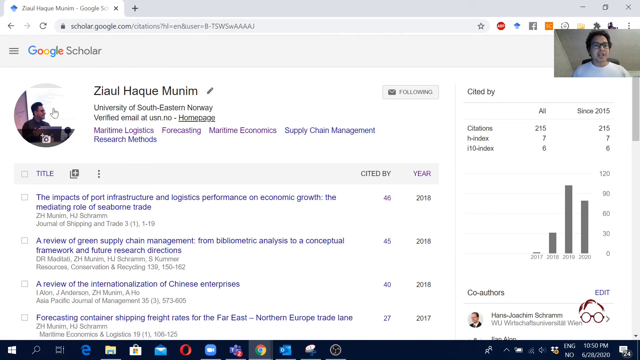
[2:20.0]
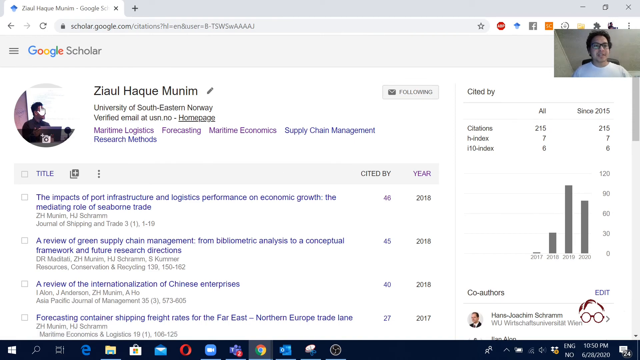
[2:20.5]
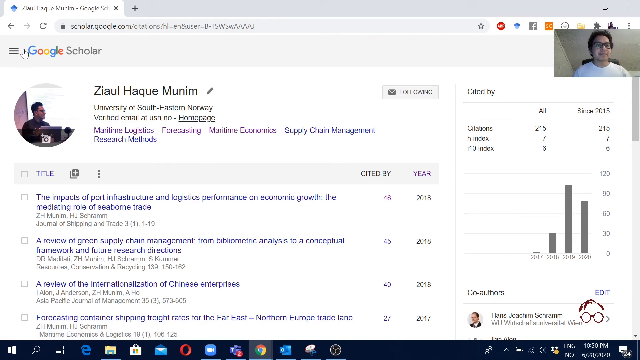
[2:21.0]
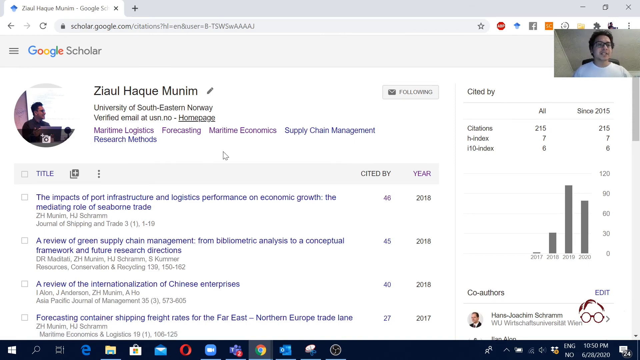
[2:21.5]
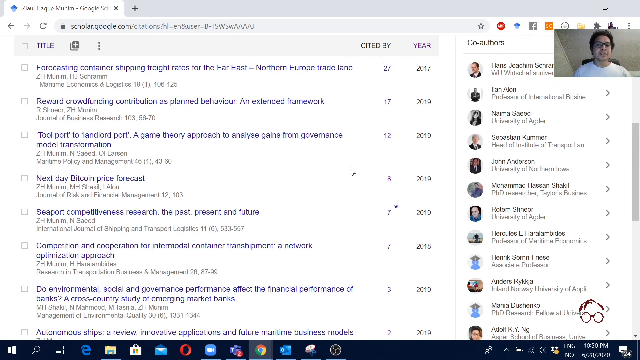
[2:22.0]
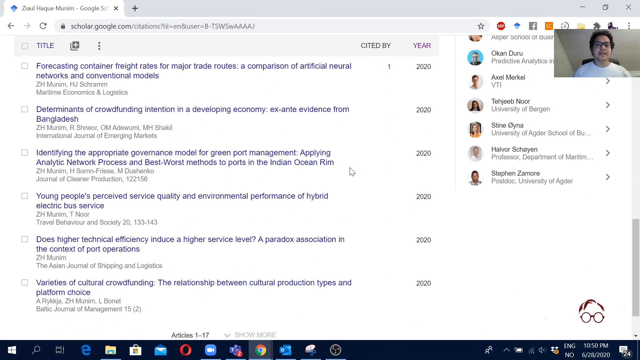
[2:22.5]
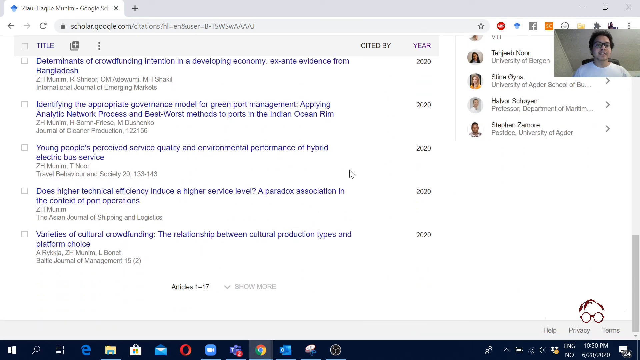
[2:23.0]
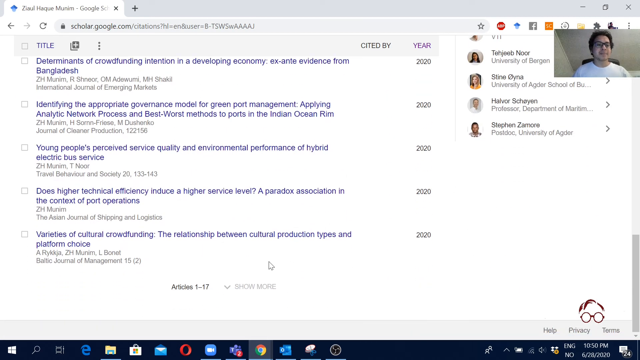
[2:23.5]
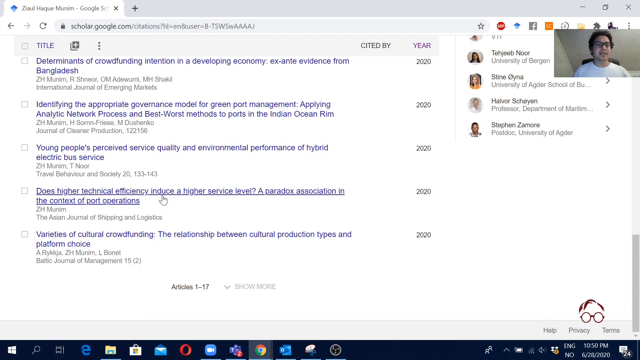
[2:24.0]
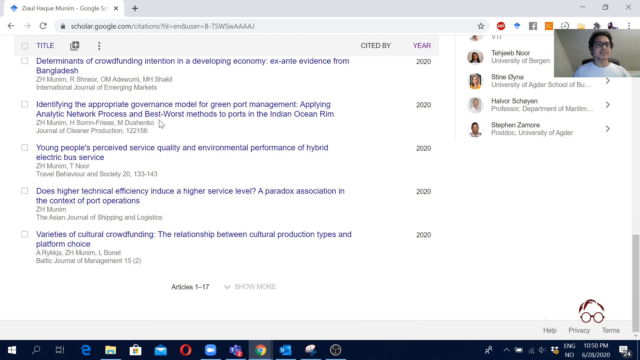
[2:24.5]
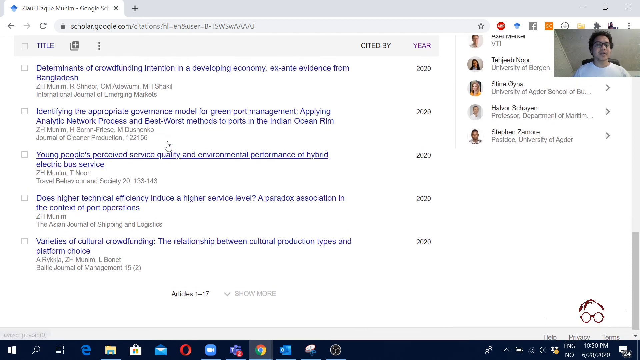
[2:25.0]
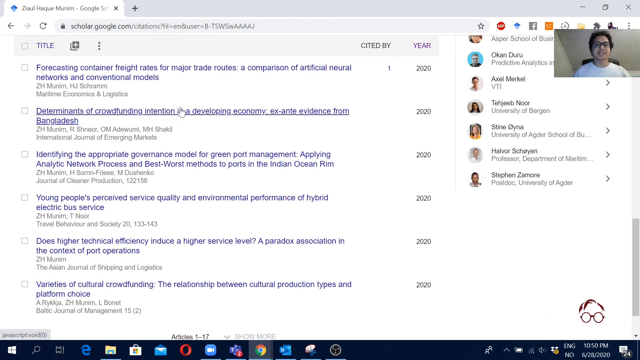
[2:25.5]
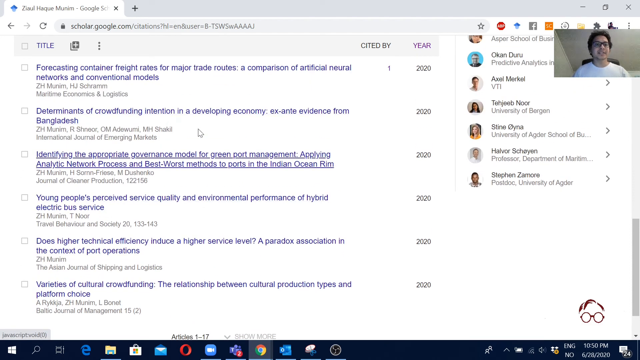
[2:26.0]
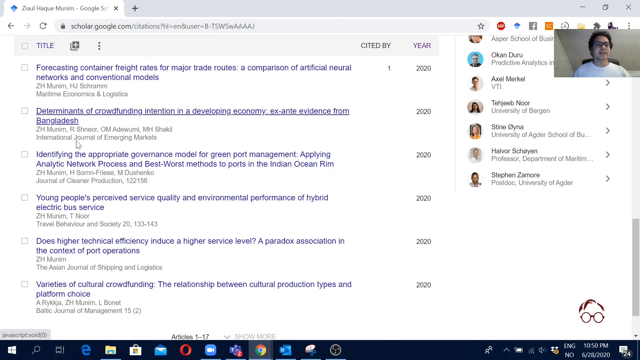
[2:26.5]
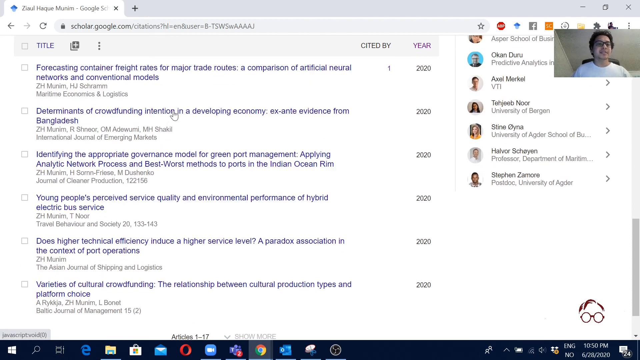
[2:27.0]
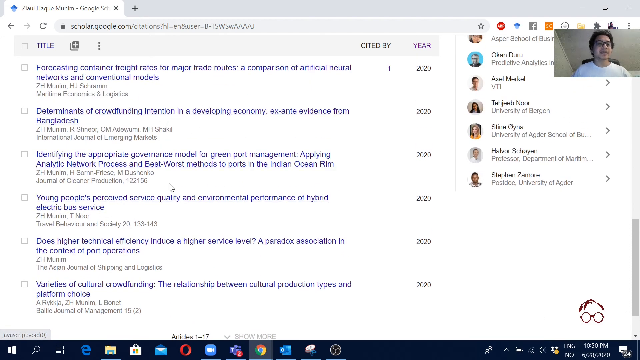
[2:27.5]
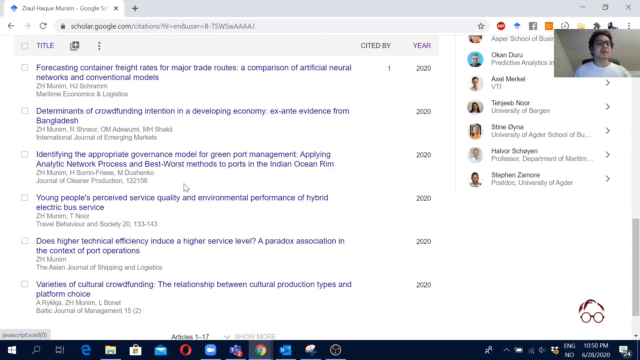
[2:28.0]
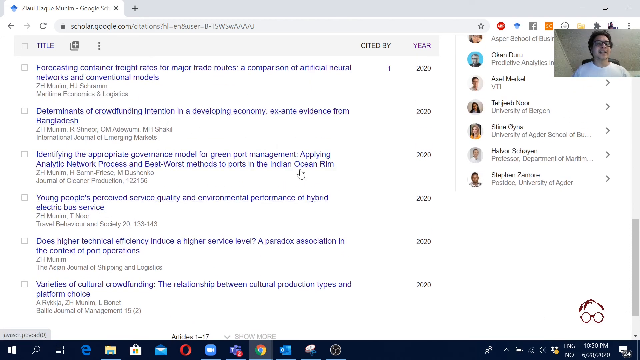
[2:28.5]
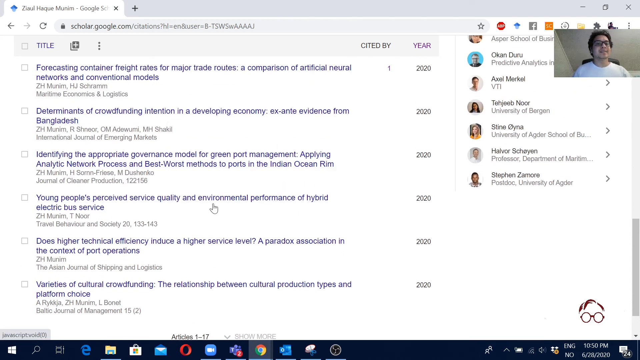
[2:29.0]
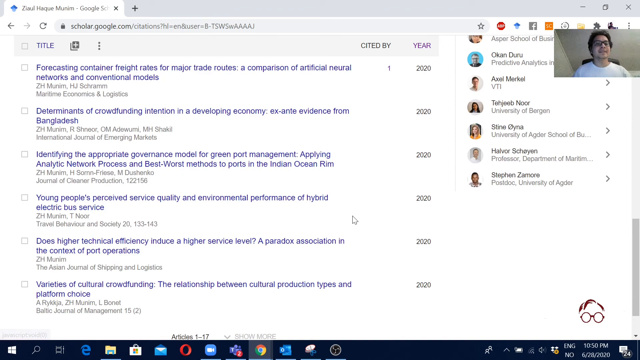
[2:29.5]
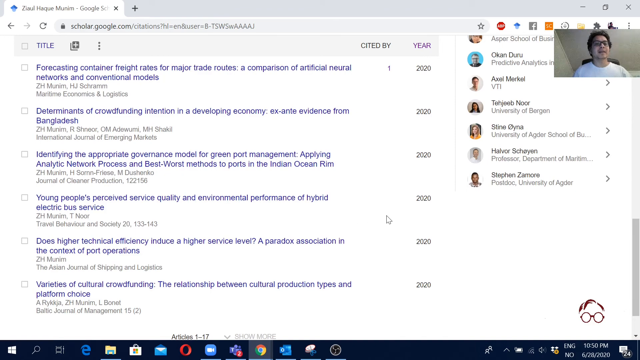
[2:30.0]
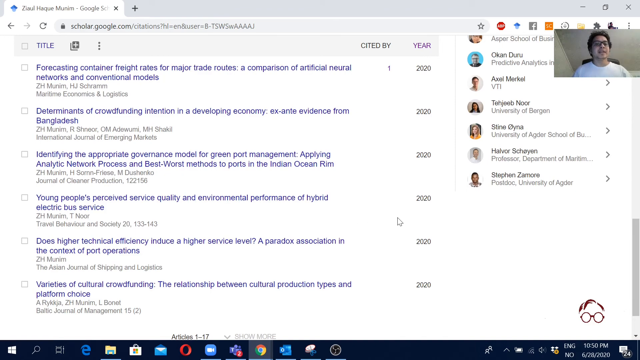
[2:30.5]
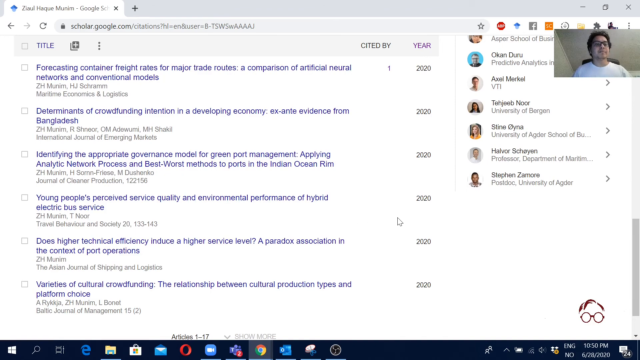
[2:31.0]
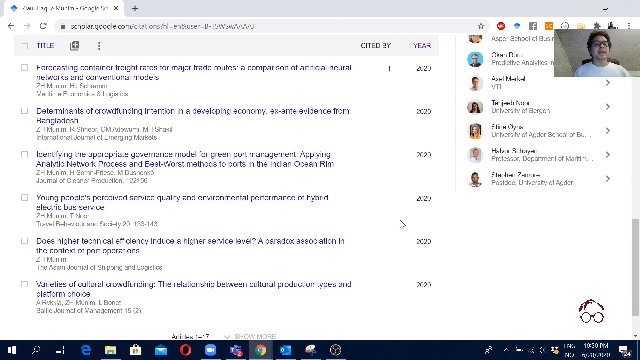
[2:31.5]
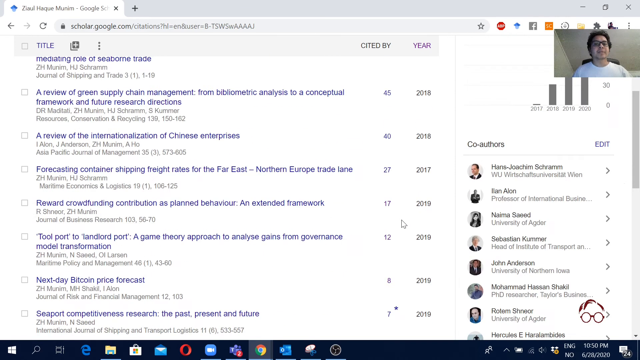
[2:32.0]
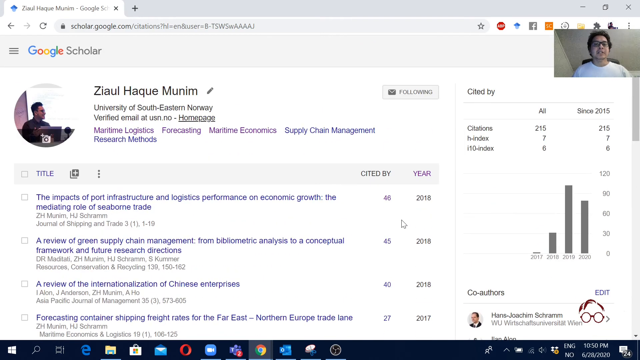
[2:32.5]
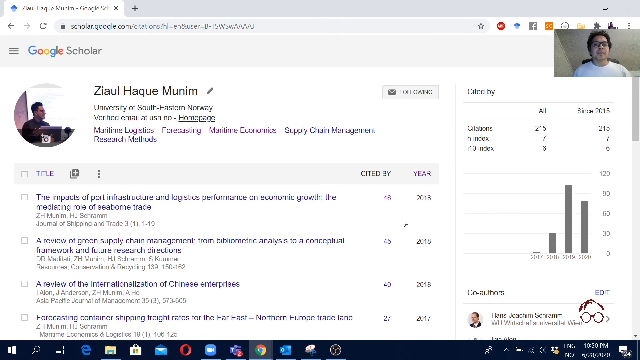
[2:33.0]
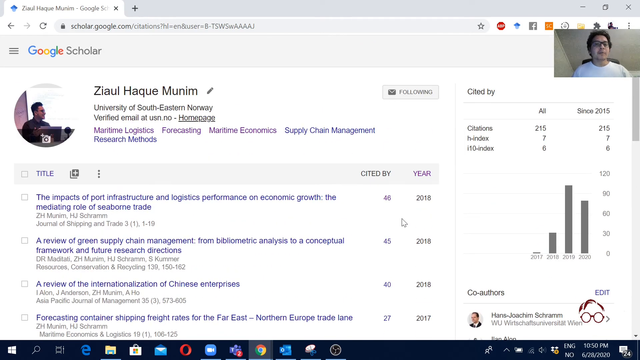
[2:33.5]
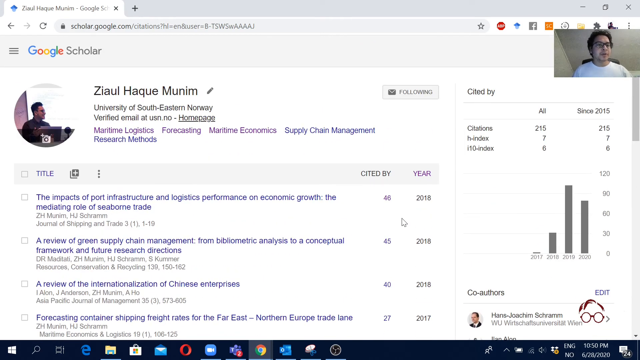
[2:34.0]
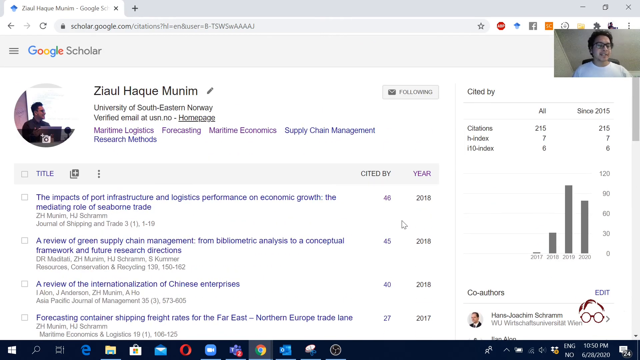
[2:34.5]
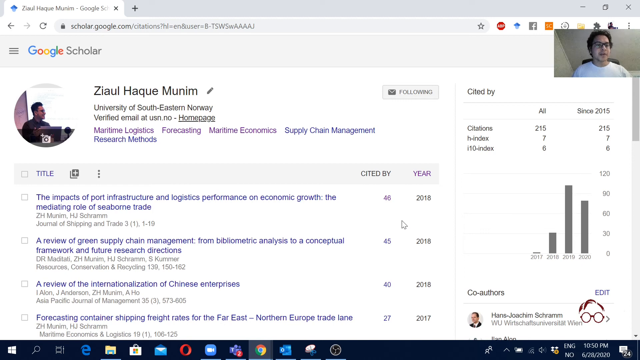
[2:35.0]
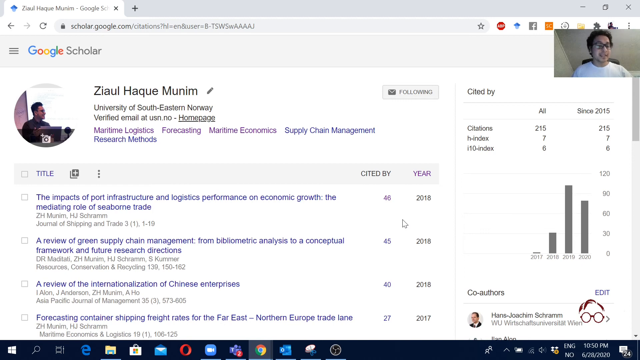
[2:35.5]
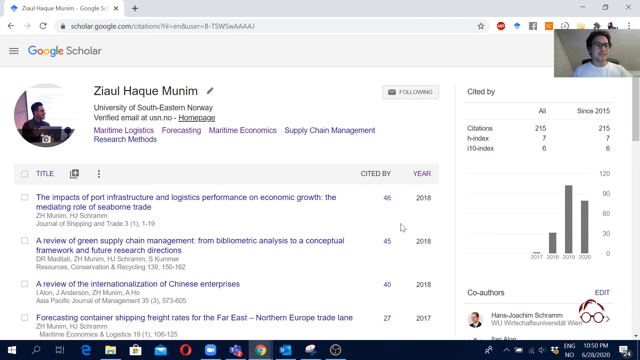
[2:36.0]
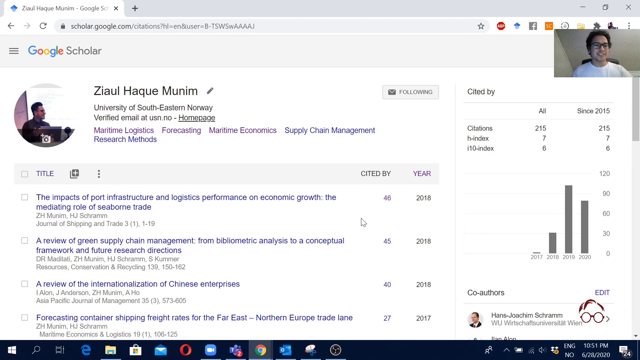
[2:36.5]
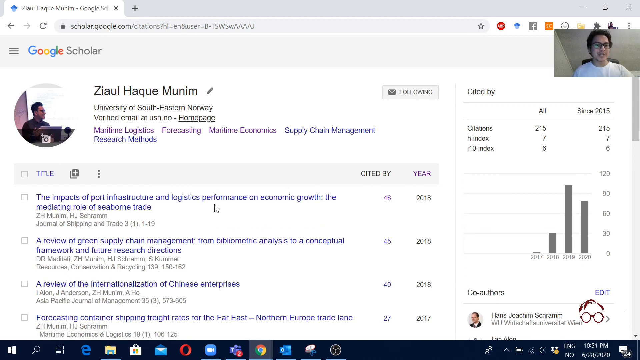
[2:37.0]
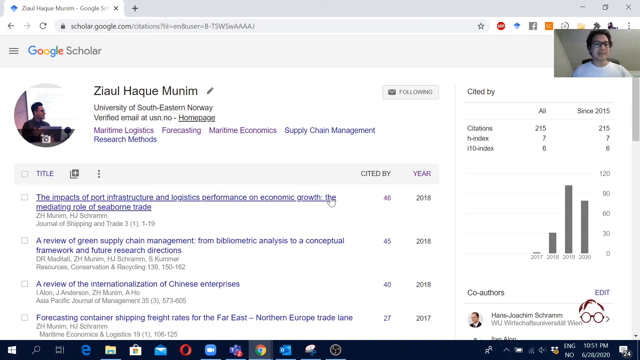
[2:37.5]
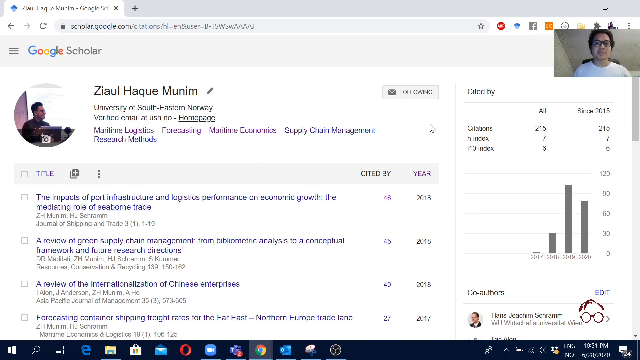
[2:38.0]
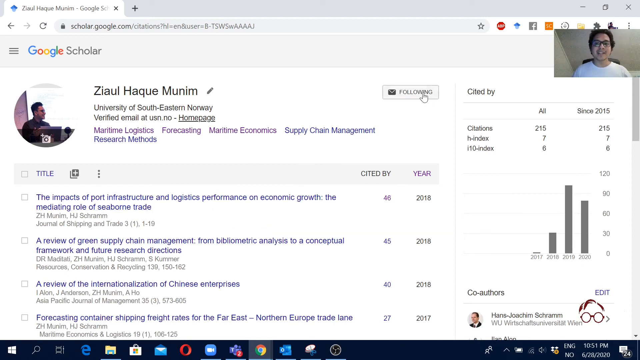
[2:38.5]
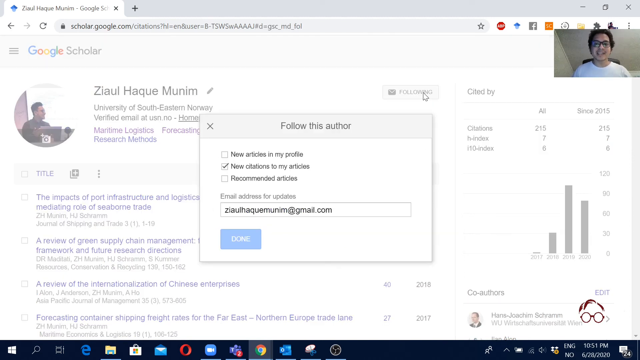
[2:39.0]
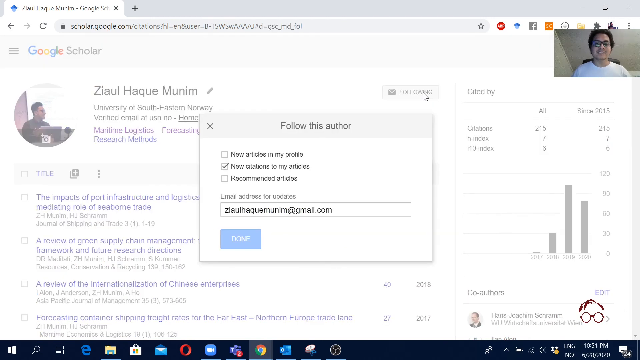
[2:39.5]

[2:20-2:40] A man's picture and profile are up as he does a tutorial, still under a Google Scholar page, with his picture in the upper right-hand corner. His name is shown as Ziaal Haqquminam, with a verified email, a homepage button, and "following". As he talks, he moves the cursor around his picture. He scrolls down and moves the cursor counterclockwise around some of the articles toward the bottom. The page also shows "cited by", graphs on the side, and a lot of other information. He clicks on "following", and a box pops up that says "follow this author", with "new citations to my article" checked.